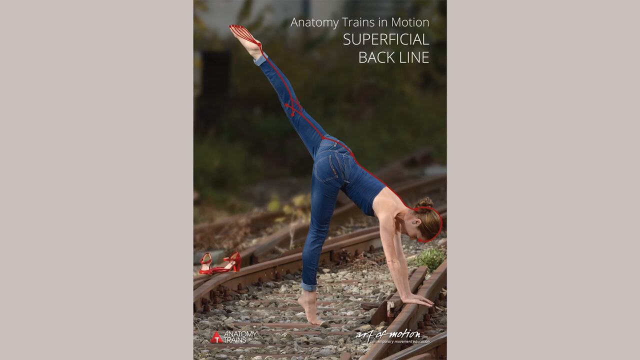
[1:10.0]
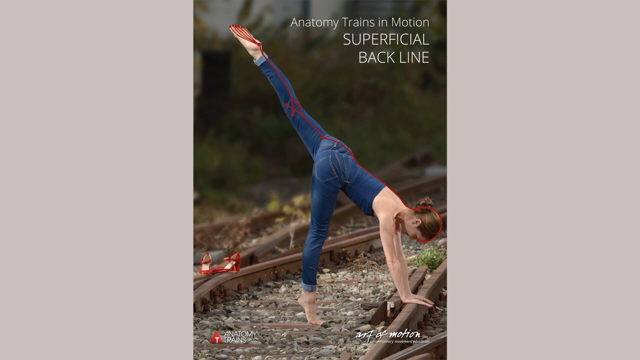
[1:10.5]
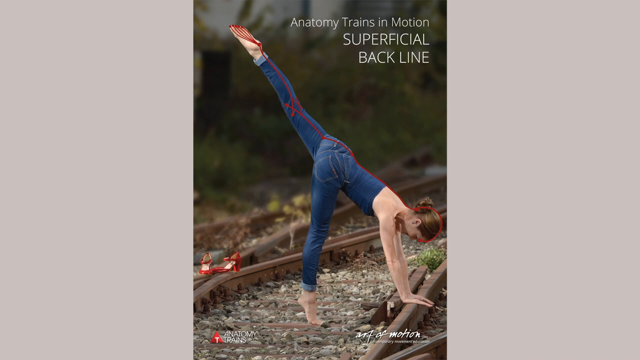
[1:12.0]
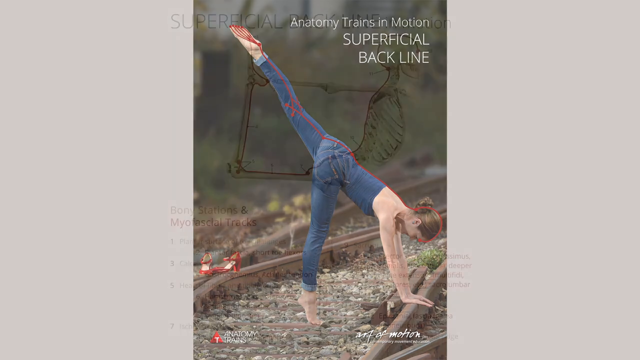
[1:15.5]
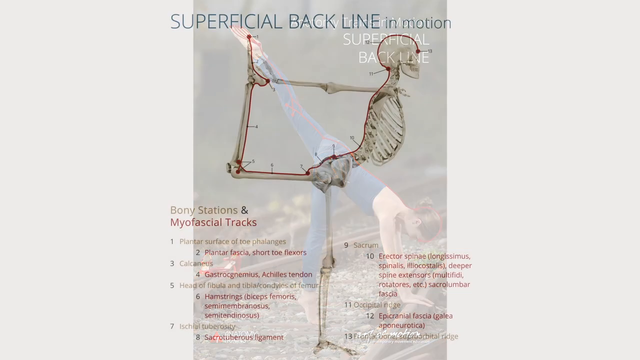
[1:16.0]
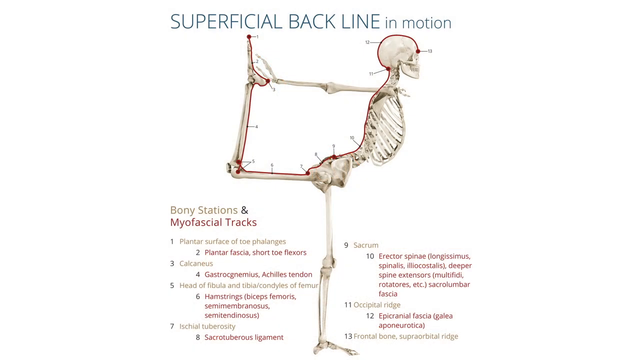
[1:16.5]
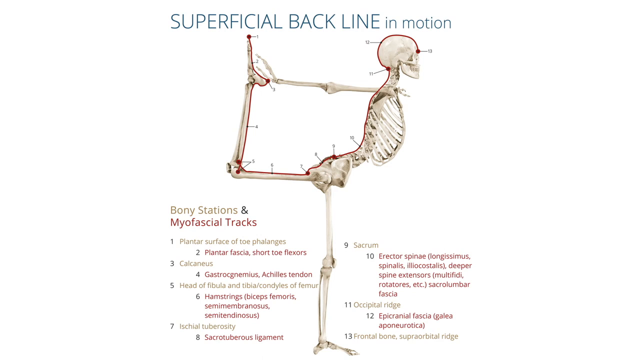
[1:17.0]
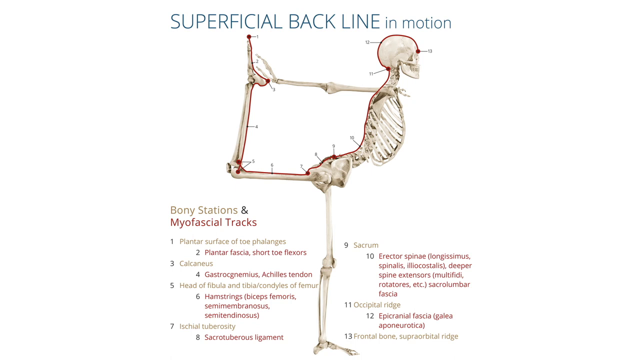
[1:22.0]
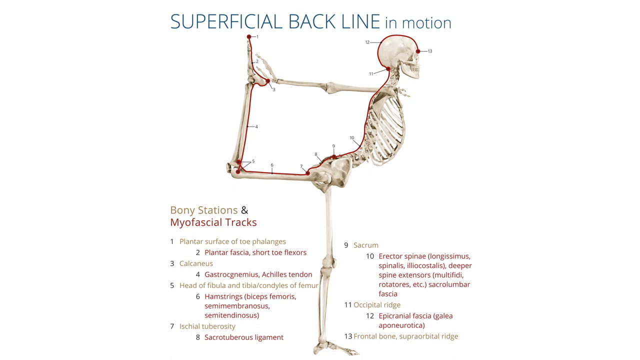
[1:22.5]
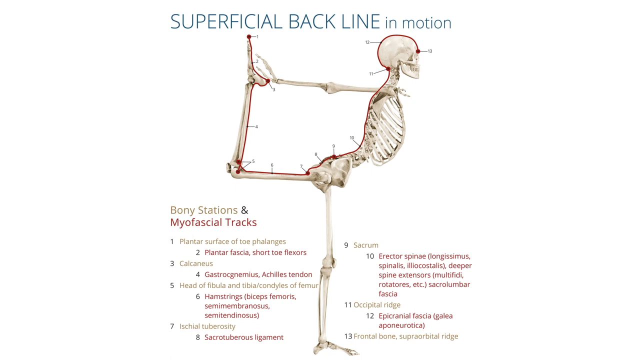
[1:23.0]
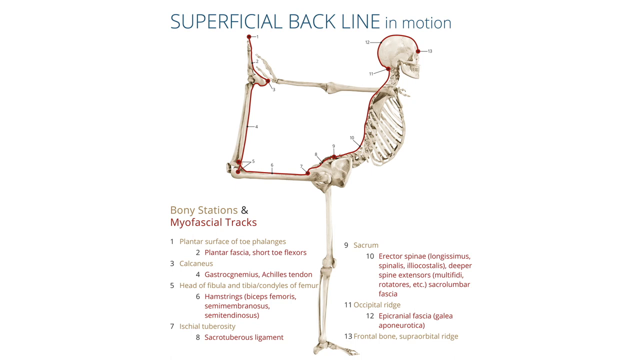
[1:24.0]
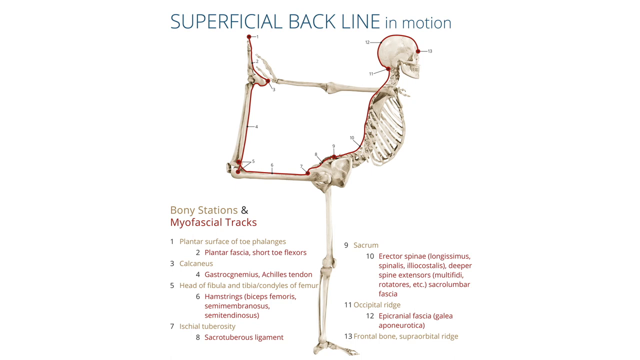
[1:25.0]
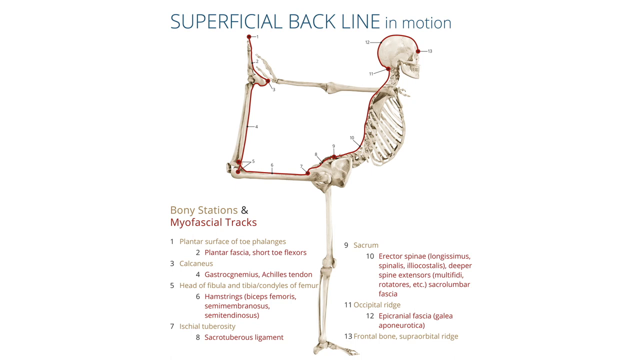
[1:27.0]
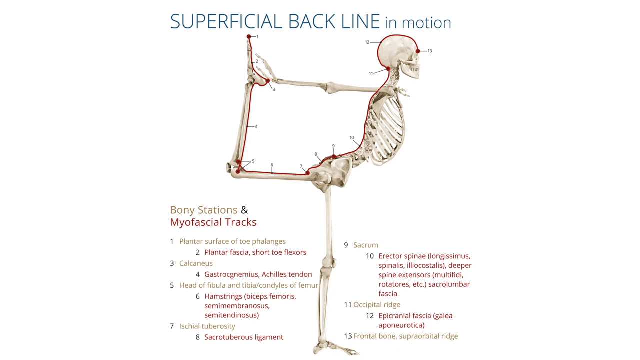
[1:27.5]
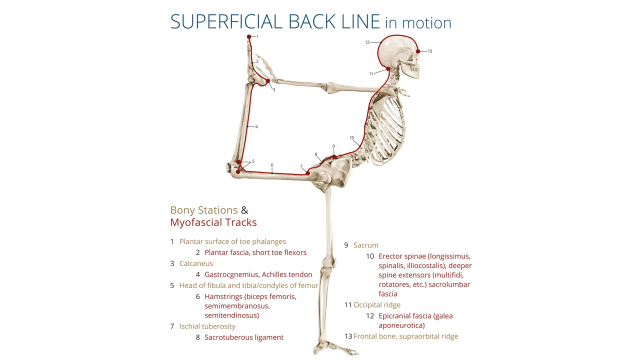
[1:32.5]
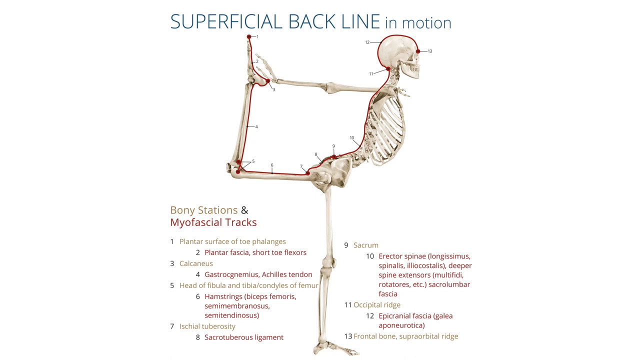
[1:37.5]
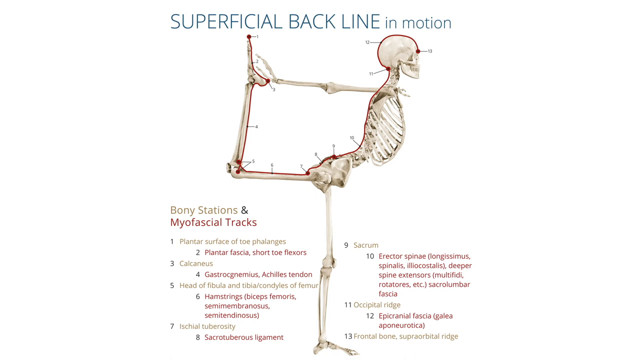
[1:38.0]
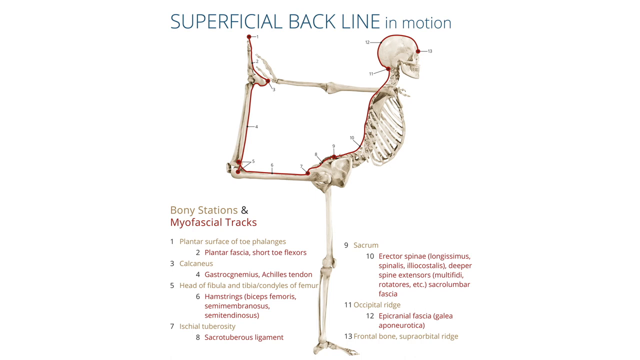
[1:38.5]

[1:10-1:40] The woman in a ballet-like form is about to do a type of somersault at the railroad track. The scene then dissolves to an anatomy graphic of a skeleton that looks like it is about to begin a similar move, although its torso stays high and its head is not down near where the track would be. The graphic has an all-white background with a gray heading at the top reading "superficial back line in motion". The skeleton's left leg is down, holding its weight on the ground, while the right leg extends behind: the long bone above the knee is parallel to the ground, and the lower leg with the calf and foot goes vertically up above the knee, held by the skeleton's arm, so the whole pose resembles the number 4. Text and annotations appear in the lower portion of the graphic. A red line traces the back in a similar way to the line on the woman at the railroad track, running from the front of the head around the skull, down the back of the neck and the back, along the back of the leg that is partially parallel to the floor, then up the calf to the foot, which is at the same height as the skull. Wording reads "bony stations" and "myofascial tracks", and ten points are written with beige headings and red or maroon letters.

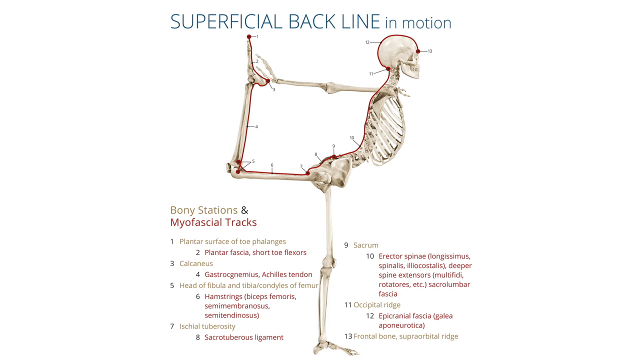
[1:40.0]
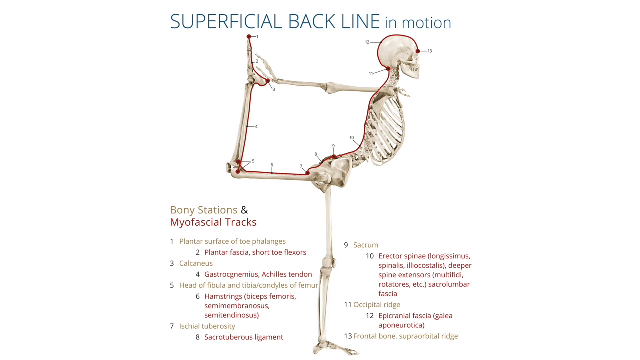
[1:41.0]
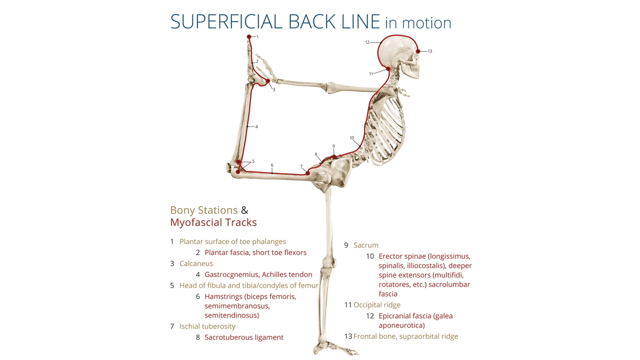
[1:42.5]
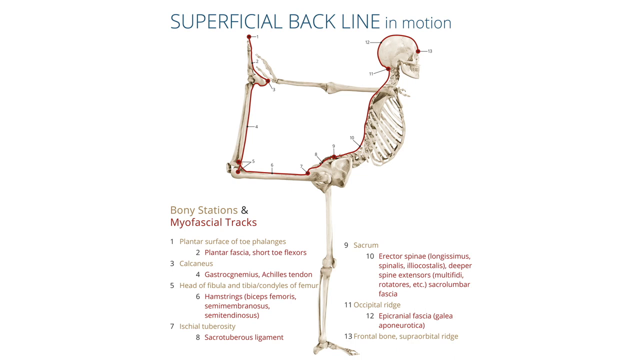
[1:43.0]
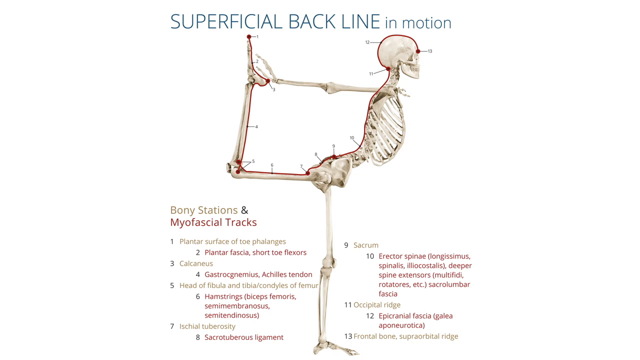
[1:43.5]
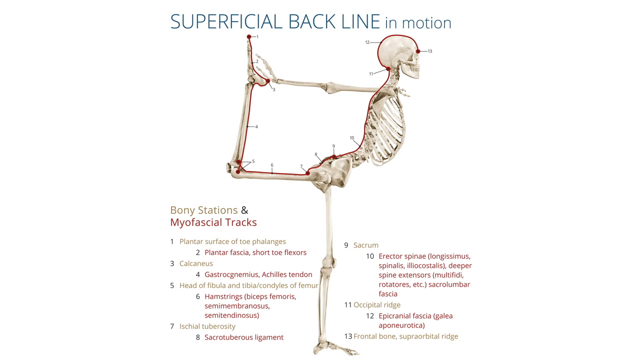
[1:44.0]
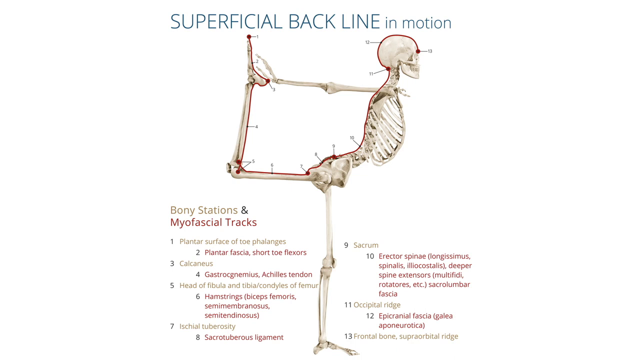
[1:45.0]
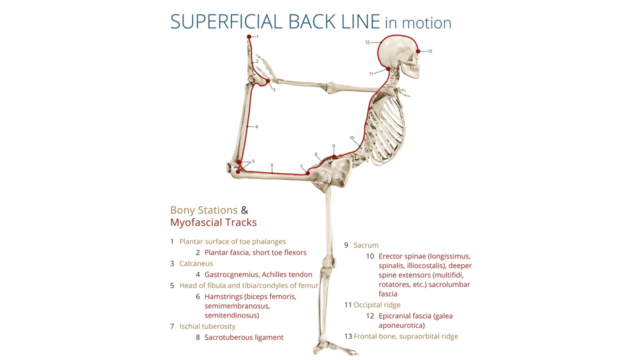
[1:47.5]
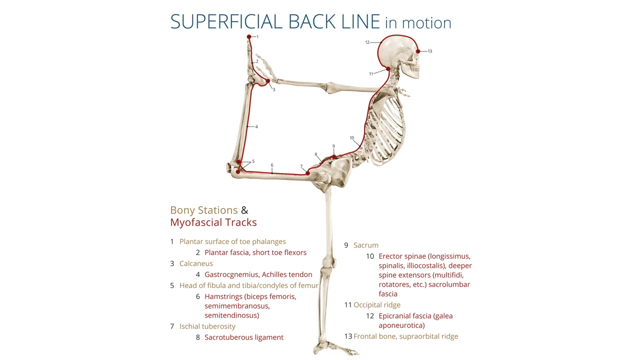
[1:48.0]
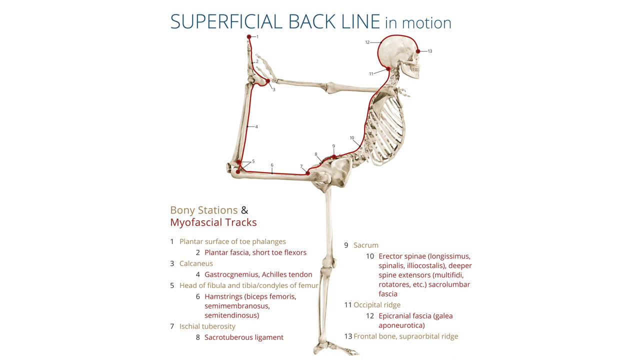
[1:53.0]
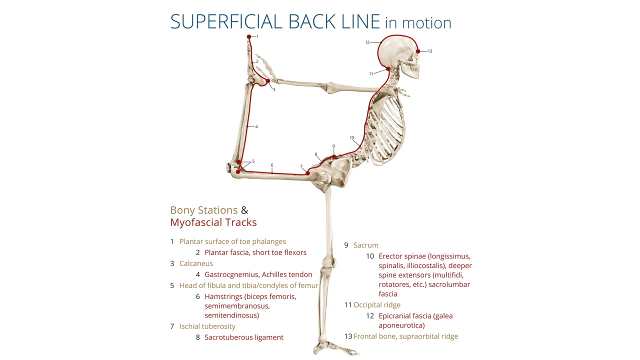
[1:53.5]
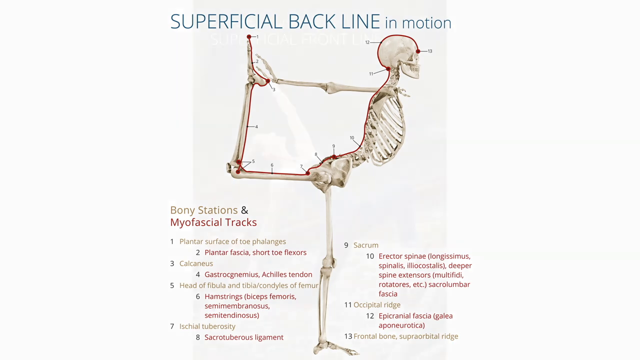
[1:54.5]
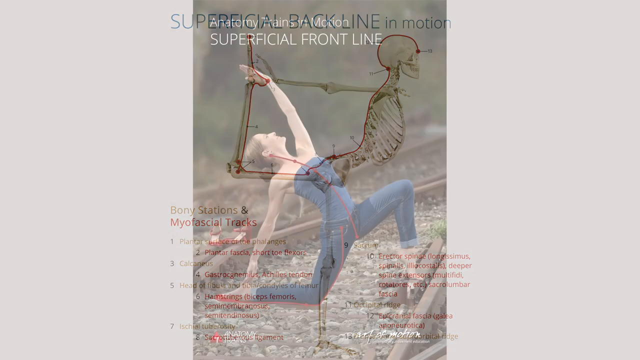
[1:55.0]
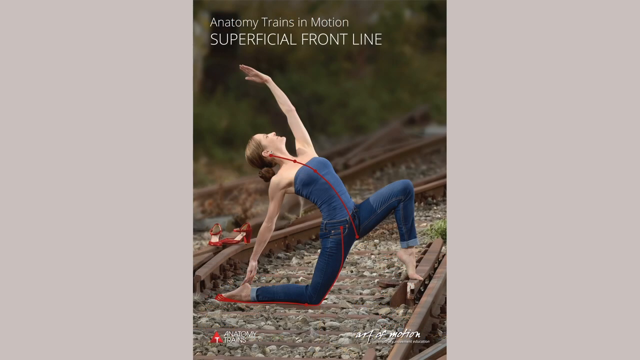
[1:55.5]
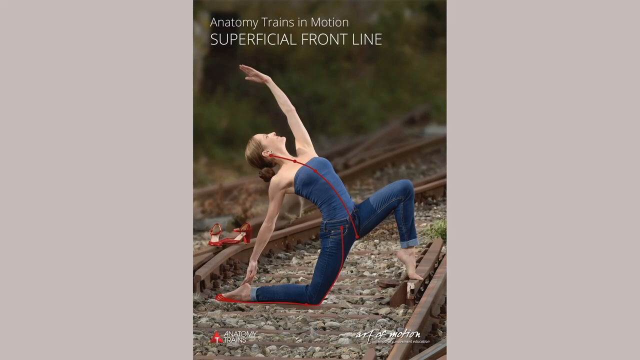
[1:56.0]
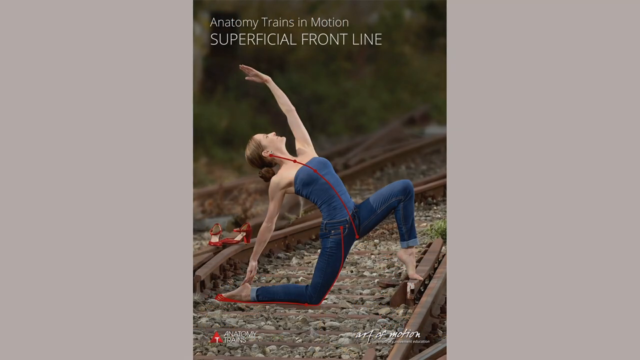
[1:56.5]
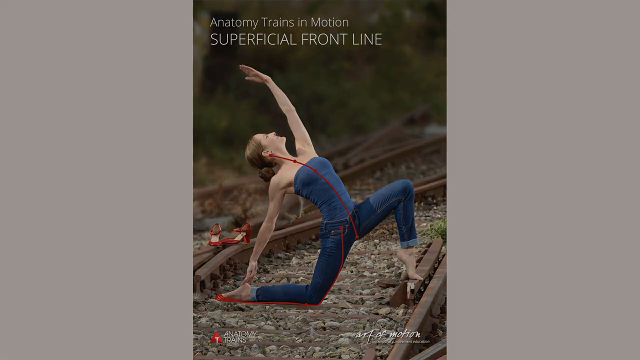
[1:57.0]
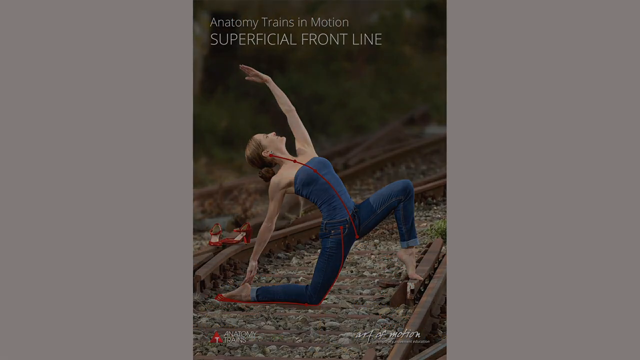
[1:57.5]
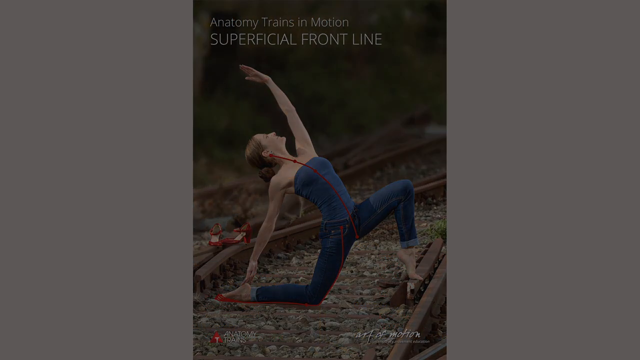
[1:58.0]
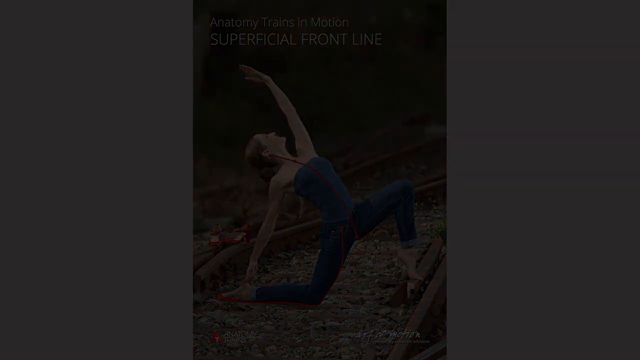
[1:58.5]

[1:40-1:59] The text annotating the skeleton graphic shows "bony stations" in beige words and "myofascial tracts" in burgundy. Point one, in beige, reads "plantar surface of toe phalanges"; point two, in red, "plantar fascia short toe flexors"; point three, in beige, "calcaneus"; point four, in red, includes "Achilles tendon"; point five reads "head of fibula and tibia". Point six, in red, lists "hamstrings, biceps femoris" and further hamstring muscles. Point seven is not visible. Point nine is "sacrum". Point ten, in red, begins "erector spinae" and lists further spinal muscles including "deeper spine extensors". Point eleven is "occipital ridge", and point twelve reads "epicranial fascia" followed by a word that is cut off. The video stays on this graphic, where the numbered points mark locations on the skeleton.